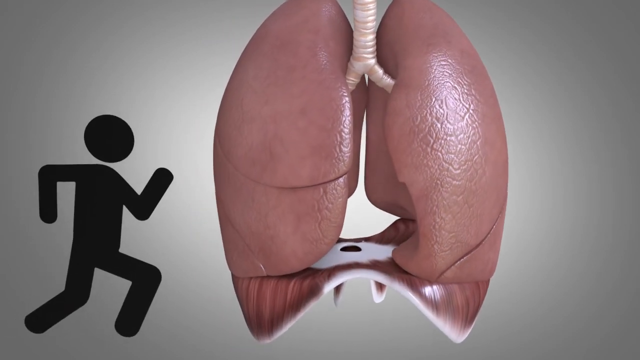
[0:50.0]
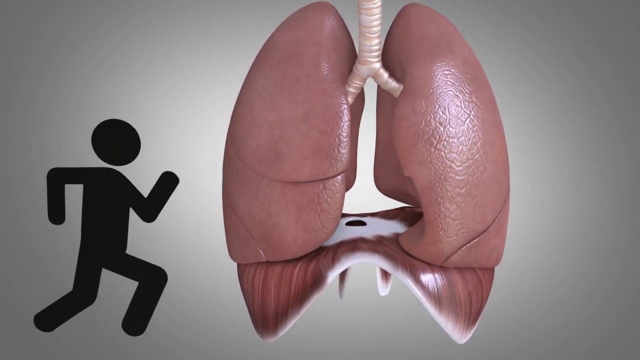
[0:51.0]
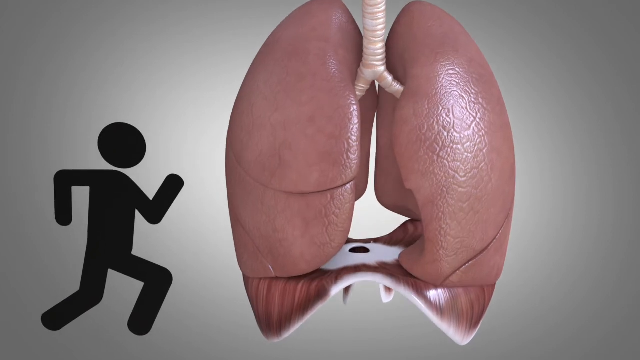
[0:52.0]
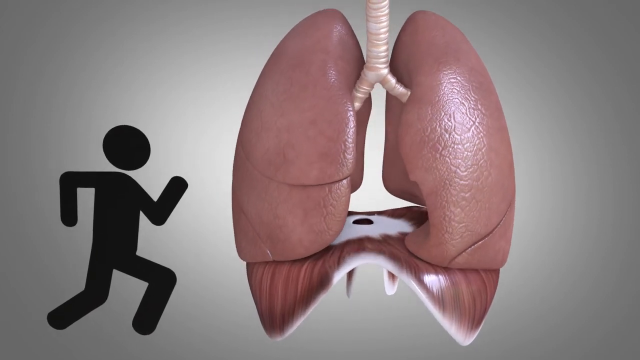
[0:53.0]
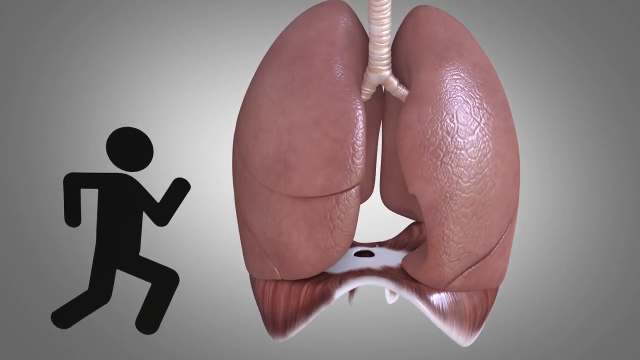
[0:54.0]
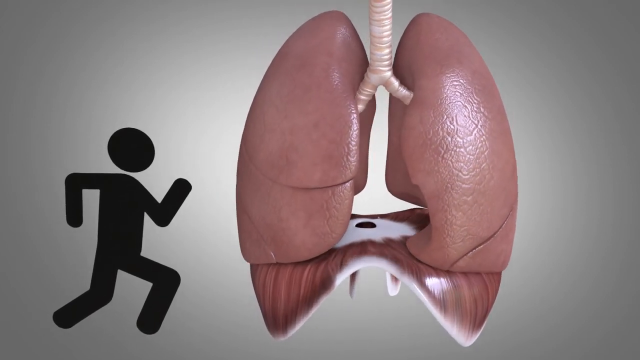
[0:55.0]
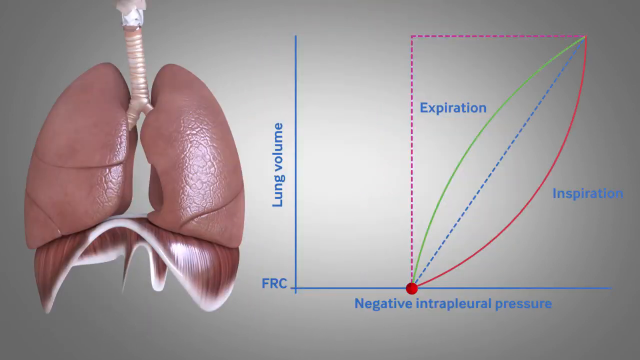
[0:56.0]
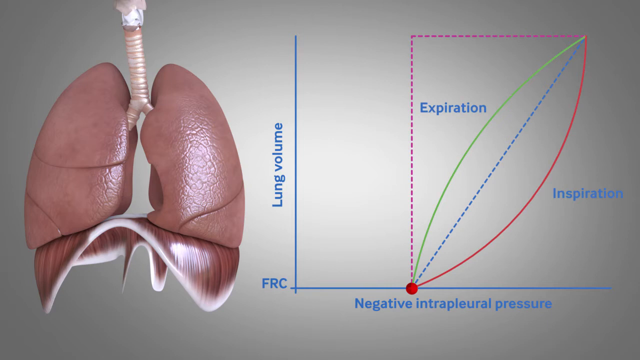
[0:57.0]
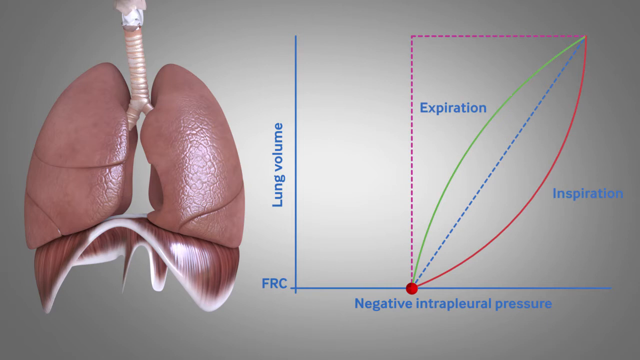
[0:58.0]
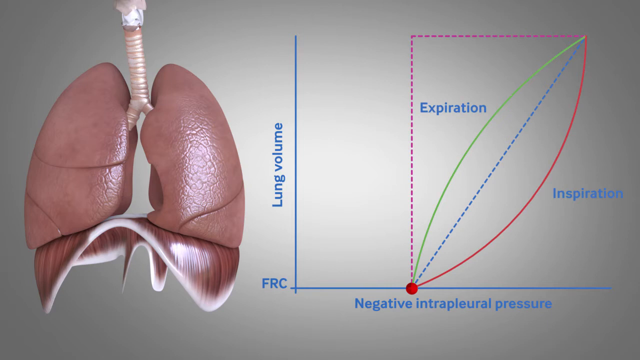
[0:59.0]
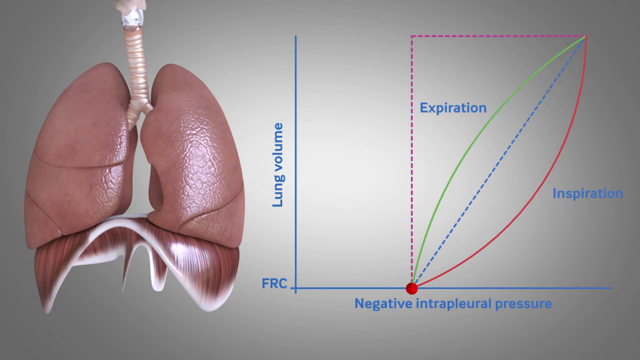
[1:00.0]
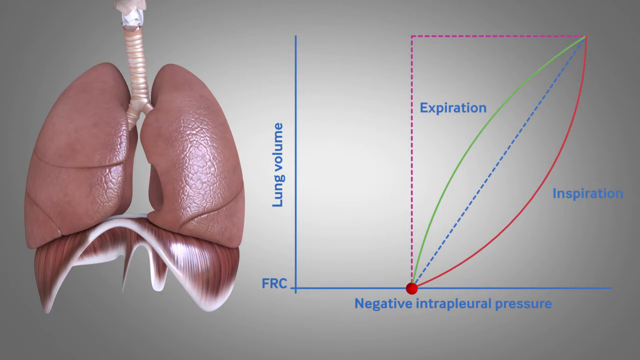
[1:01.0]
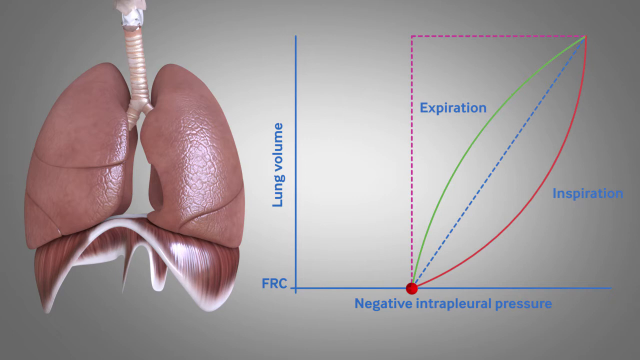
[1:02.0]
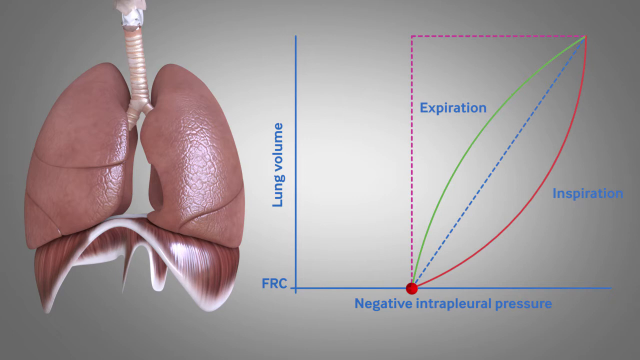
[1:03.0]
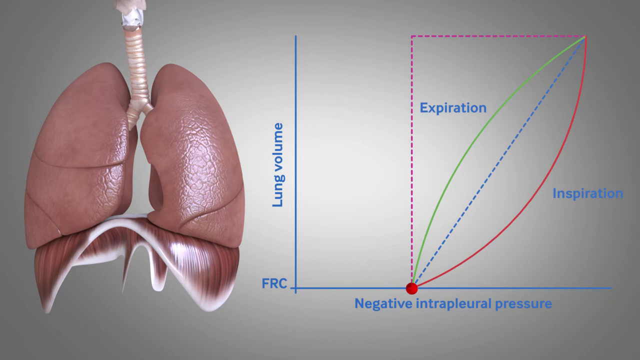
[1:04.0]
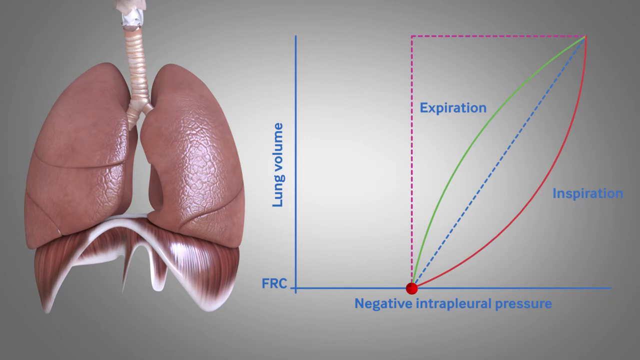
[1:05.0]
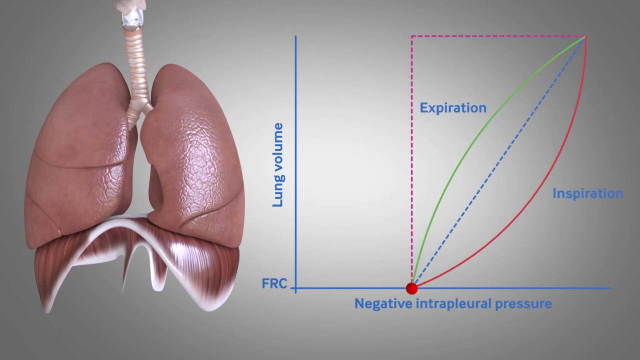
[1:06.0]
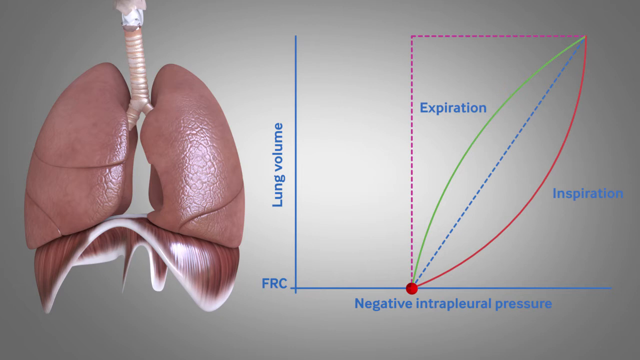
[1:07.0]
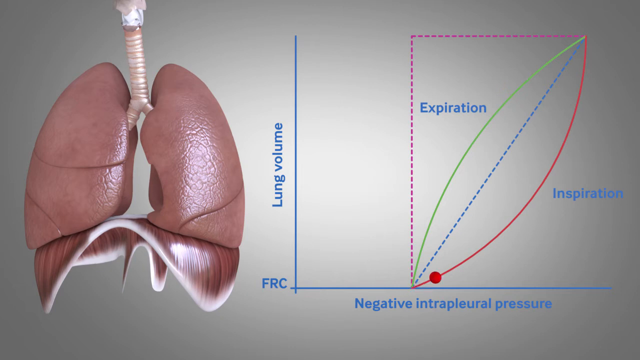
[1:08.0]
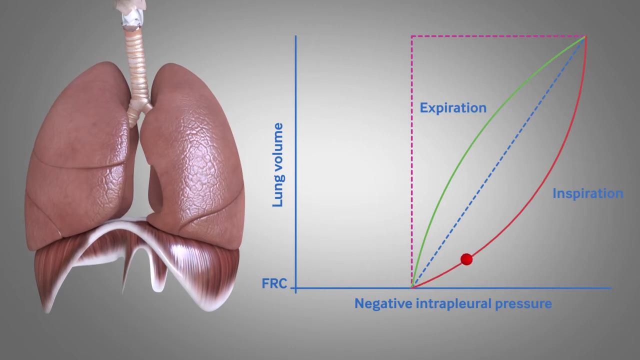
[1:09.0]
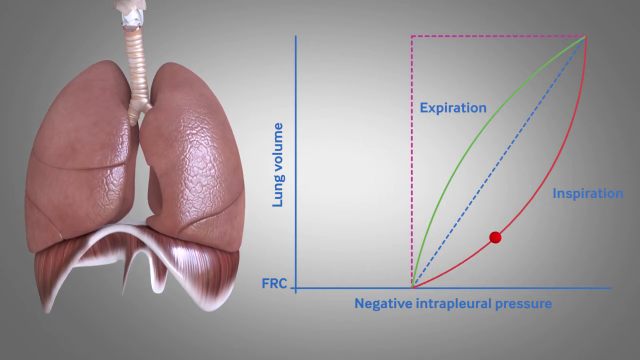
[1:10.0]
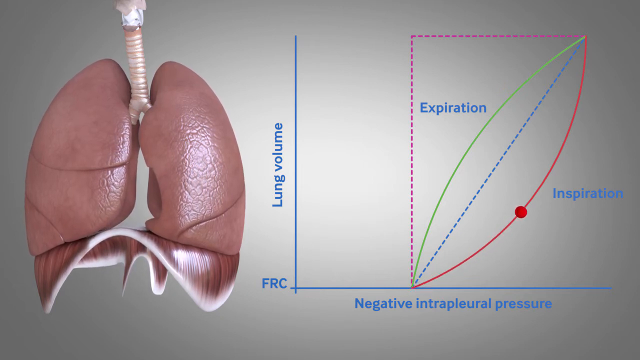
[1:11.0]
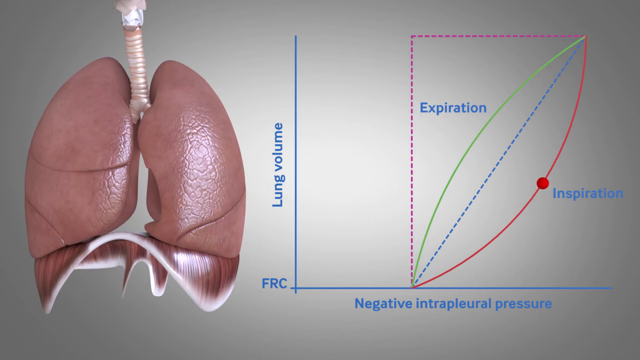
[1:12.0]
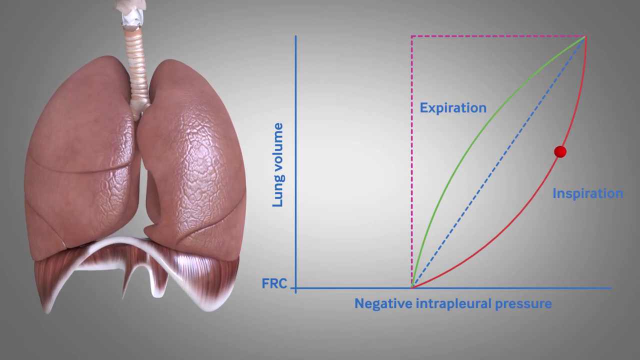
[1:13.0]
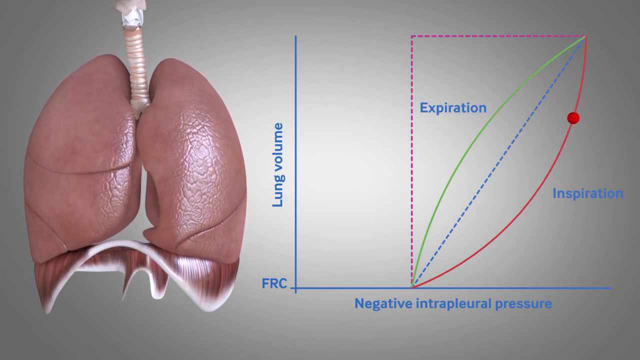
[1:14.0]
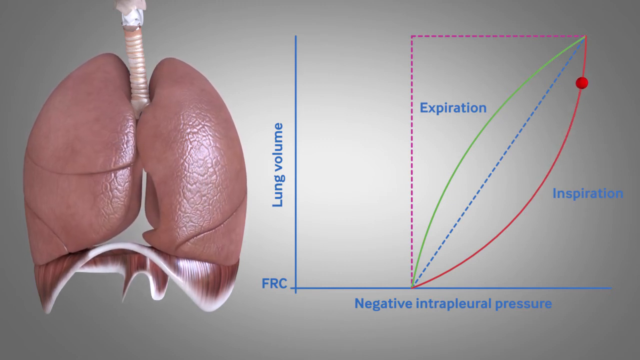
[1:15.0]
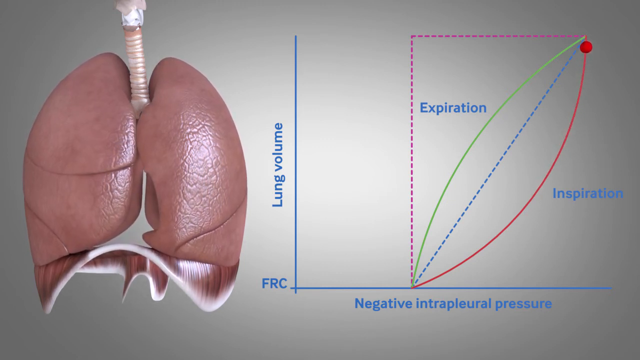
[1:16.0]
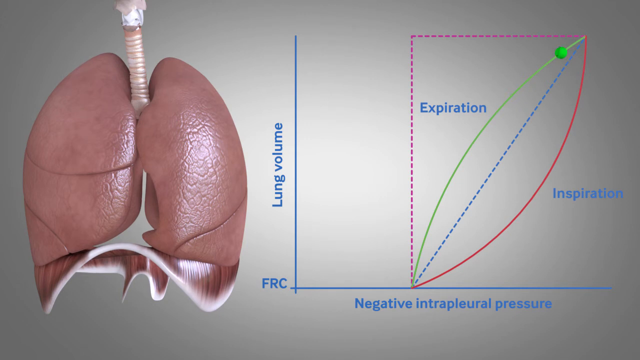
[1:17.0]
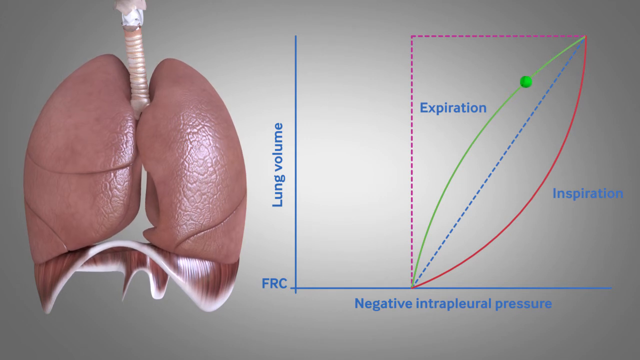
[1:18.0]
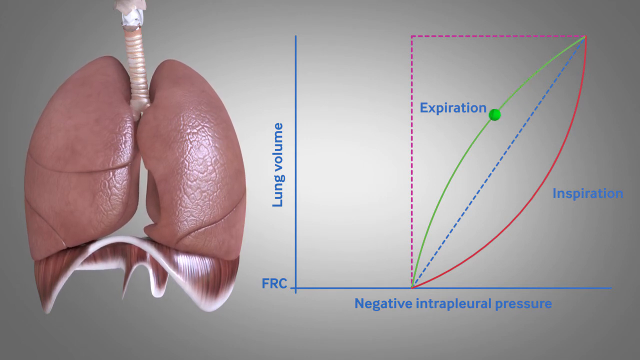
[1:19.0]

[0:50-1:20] A CGI illustration shows human lungs at work. The lungs, which are pink, and the diaphragm below them are depicted in the center of the screen. A white windpipe comes down from the top of the screen and branches off into each lung, and the diaphragm appears below the lungs as a flat pink surface with flaps that extend downward. On the left side of the screen is a graphic of a running stick figure. The lungs expand and contract quickly, as if someone is breathing heavily, and the diaphragm raises and lowers each time. The scene switches to show the lungs on the left and a chart on the right. The x-axis of the chart reads "Negative intrapleural pressure" and the y-axis is labeled "Lung volume." On the chart there is a dotted red line that goes up and then turns to the right, and a diagonal dotted blue line, with a solid curved green line above it and a solid curved red line below it; they all touch in the top right corner. The word "Expiration" is above the green line and the word "Inspiration" is below the red line. At one point a red dot travels up the red Inspiration line, and as it reaches the top it turns green and descends down the Expiration line.